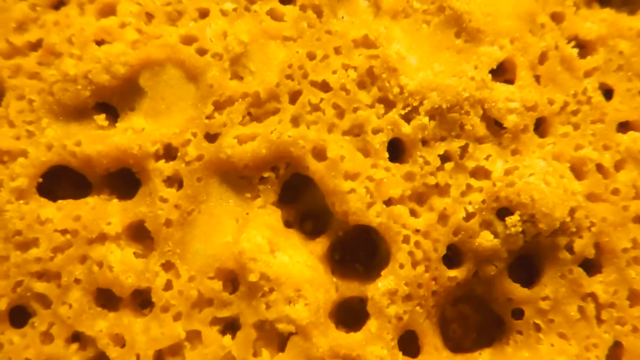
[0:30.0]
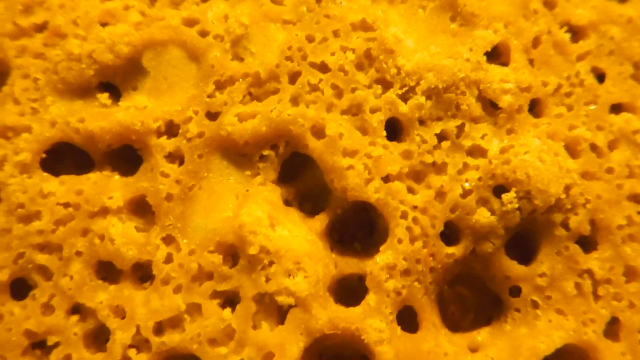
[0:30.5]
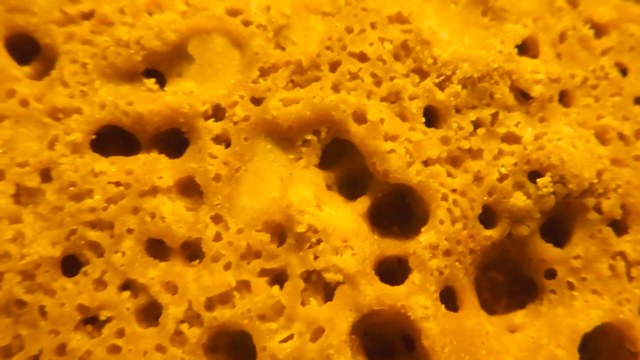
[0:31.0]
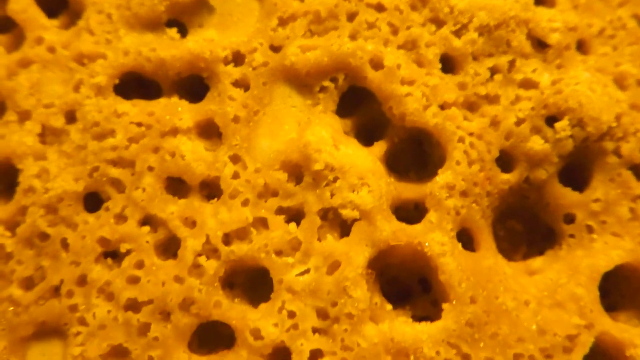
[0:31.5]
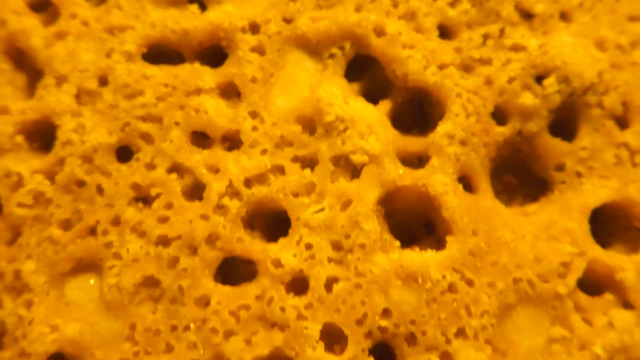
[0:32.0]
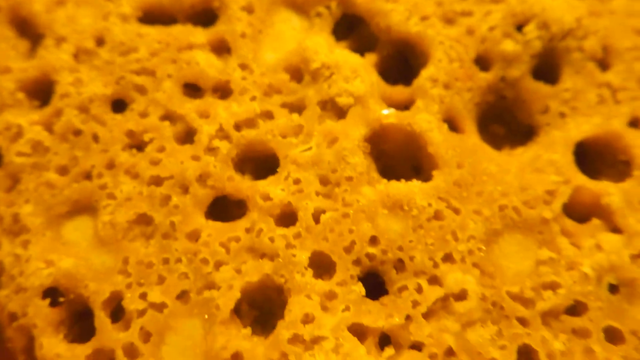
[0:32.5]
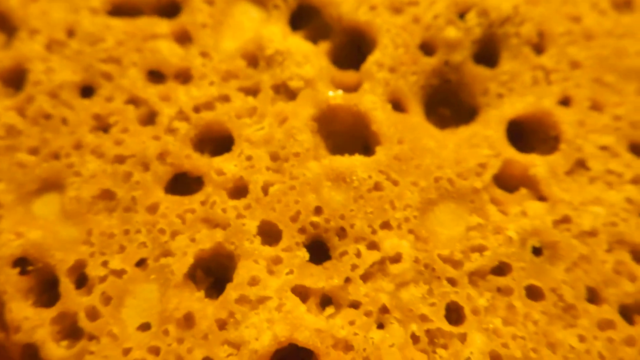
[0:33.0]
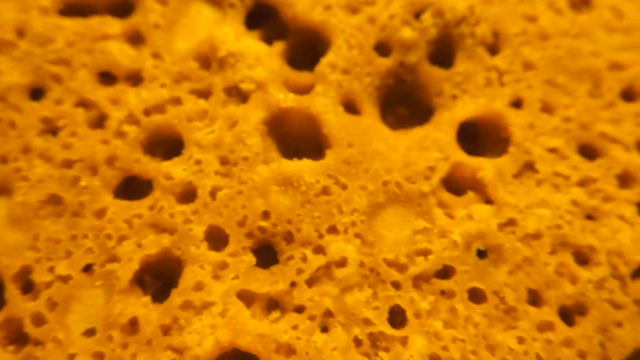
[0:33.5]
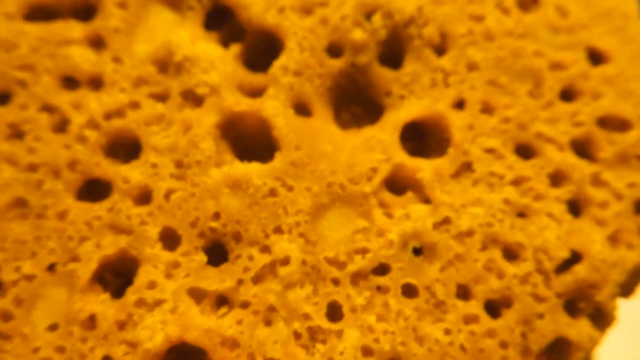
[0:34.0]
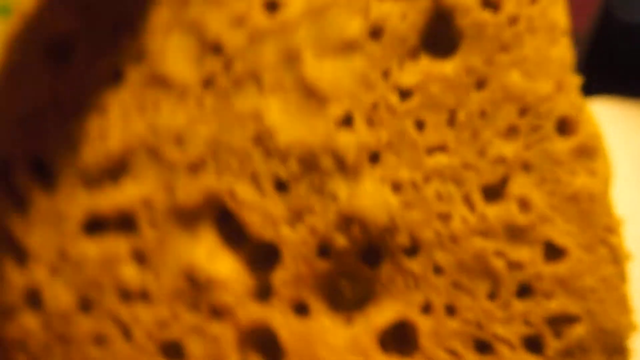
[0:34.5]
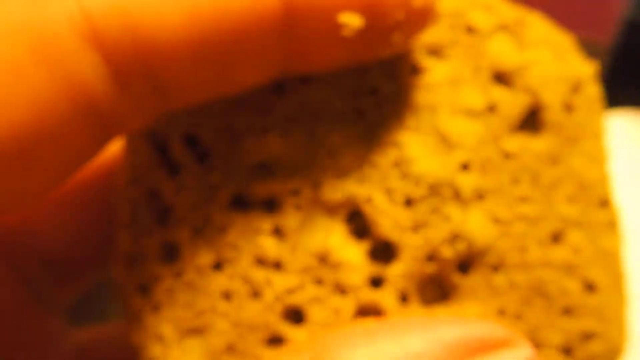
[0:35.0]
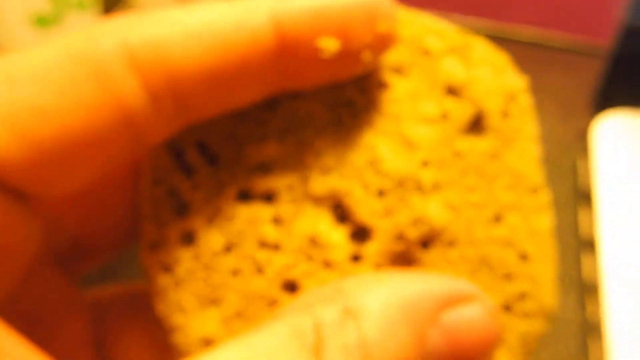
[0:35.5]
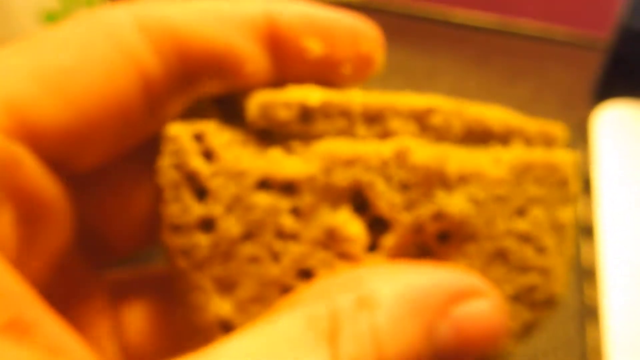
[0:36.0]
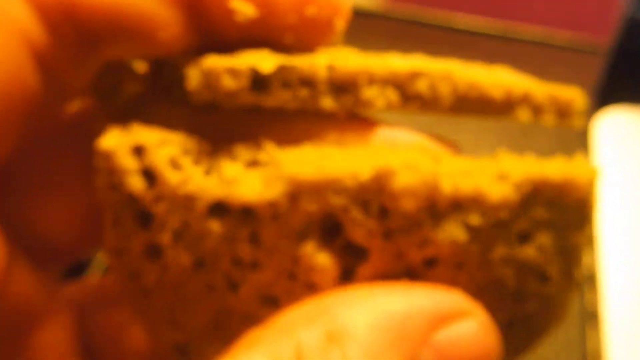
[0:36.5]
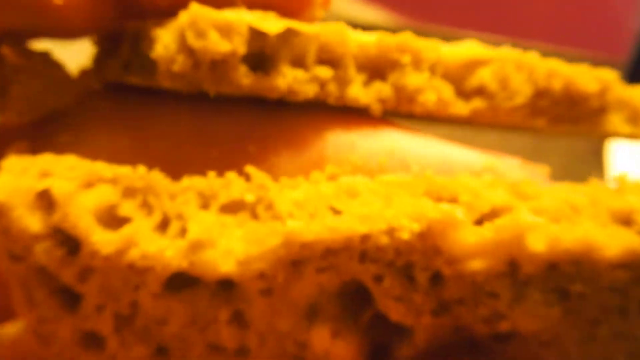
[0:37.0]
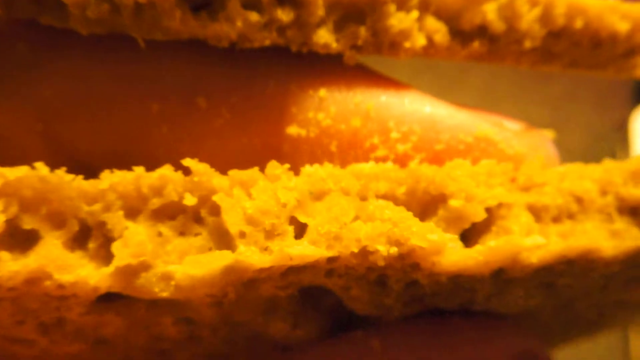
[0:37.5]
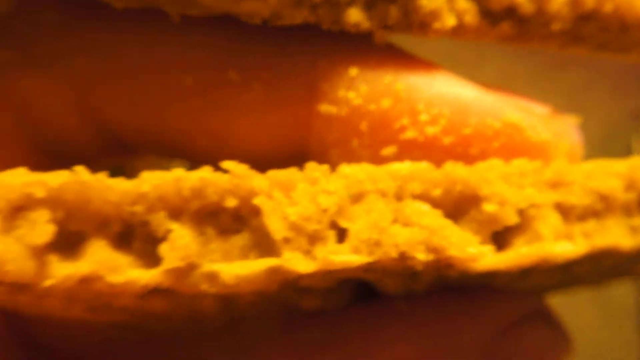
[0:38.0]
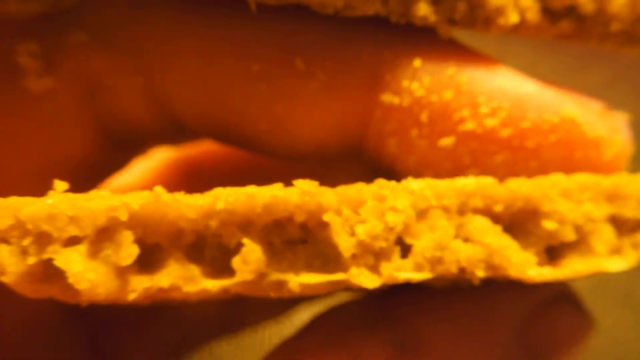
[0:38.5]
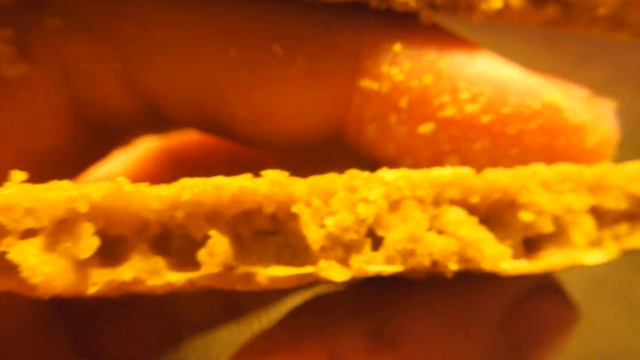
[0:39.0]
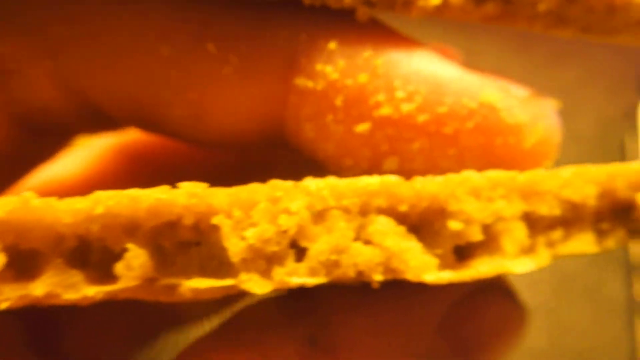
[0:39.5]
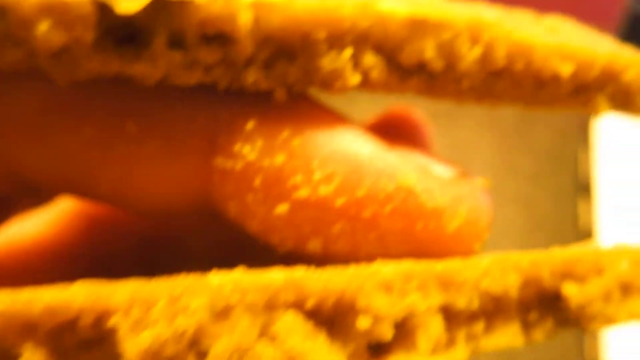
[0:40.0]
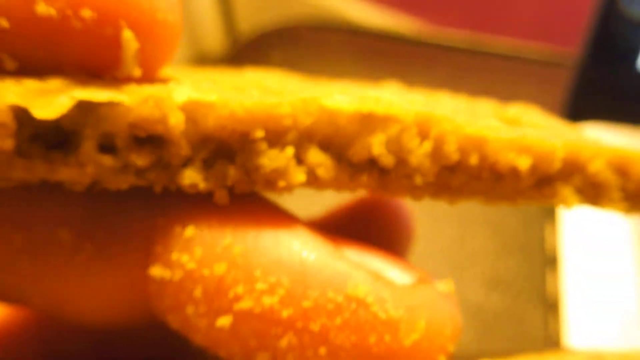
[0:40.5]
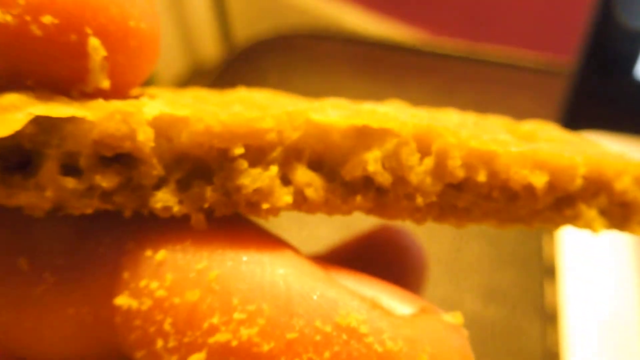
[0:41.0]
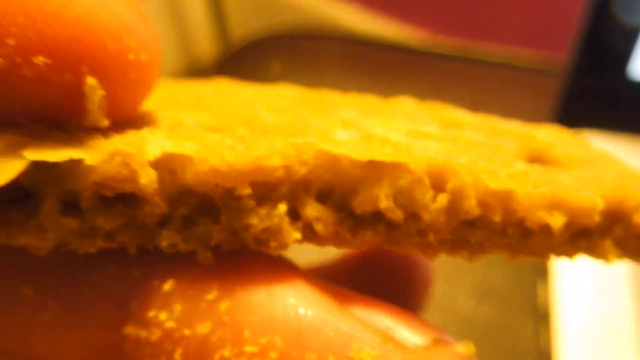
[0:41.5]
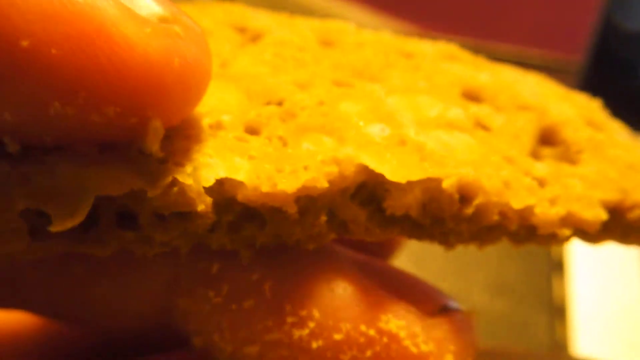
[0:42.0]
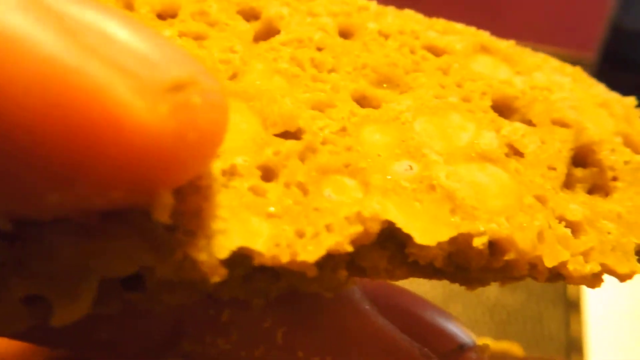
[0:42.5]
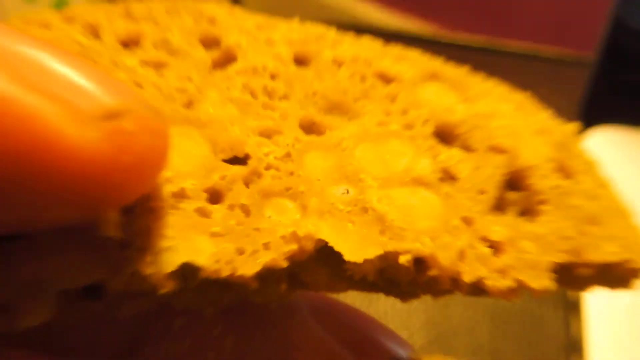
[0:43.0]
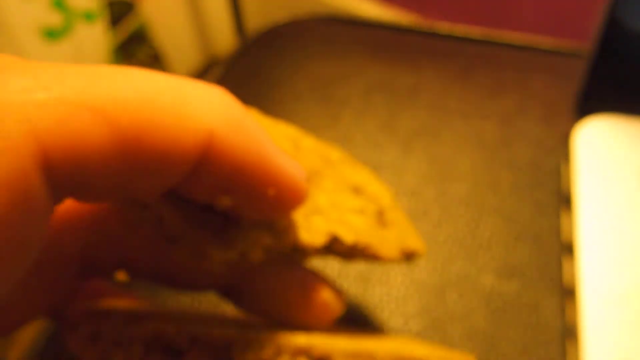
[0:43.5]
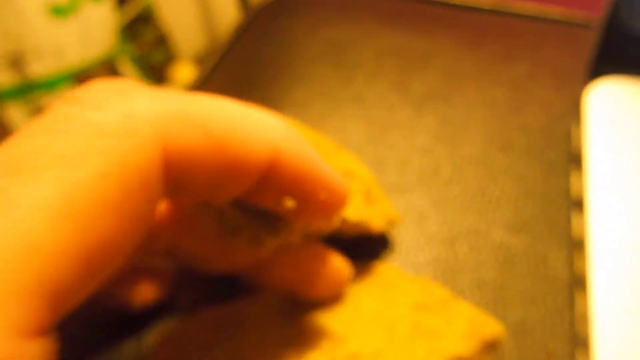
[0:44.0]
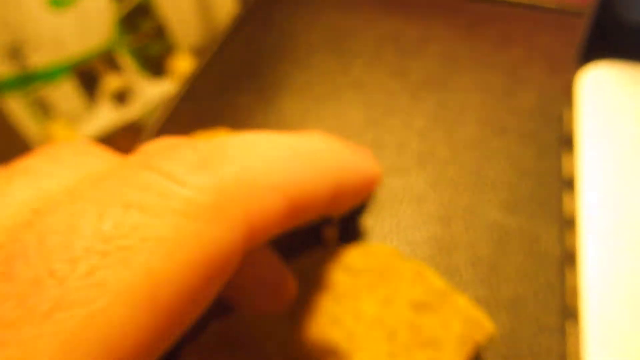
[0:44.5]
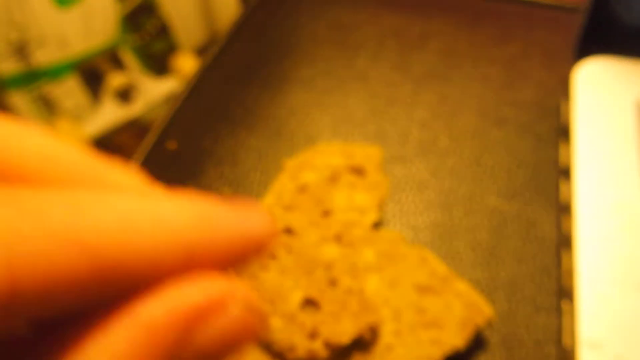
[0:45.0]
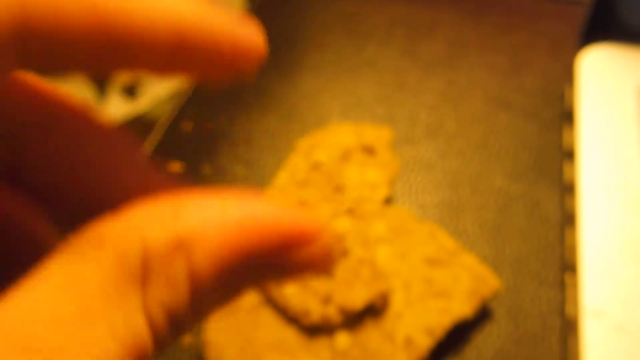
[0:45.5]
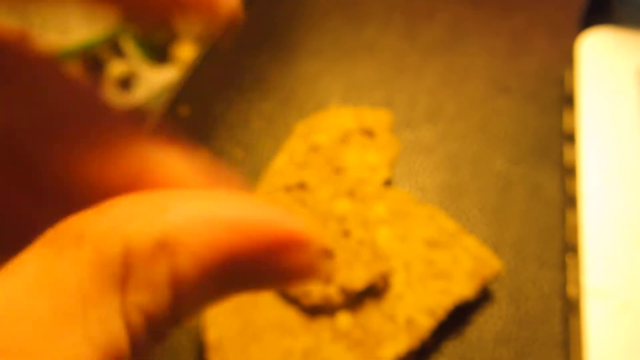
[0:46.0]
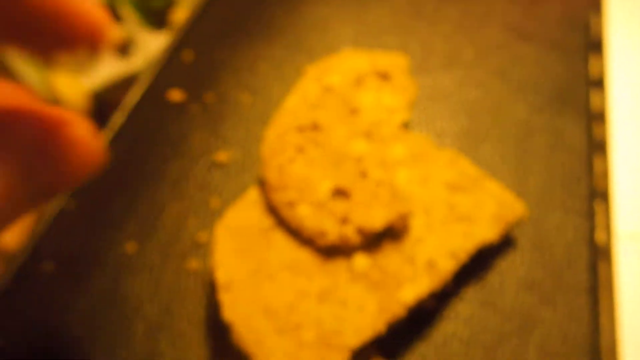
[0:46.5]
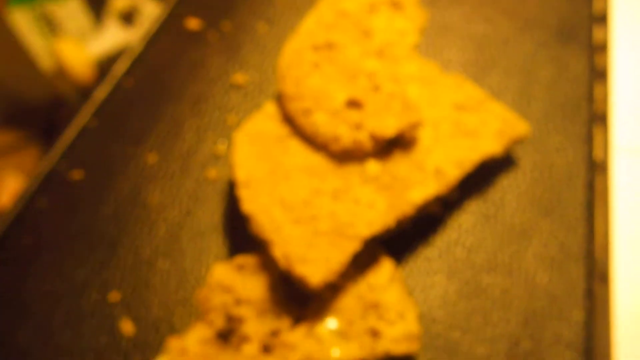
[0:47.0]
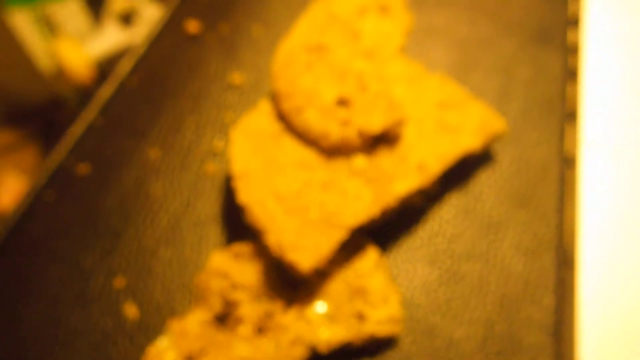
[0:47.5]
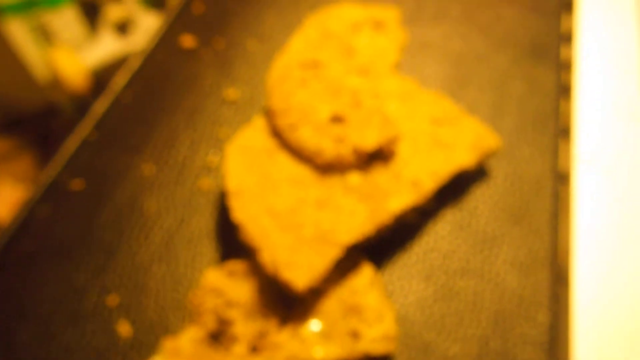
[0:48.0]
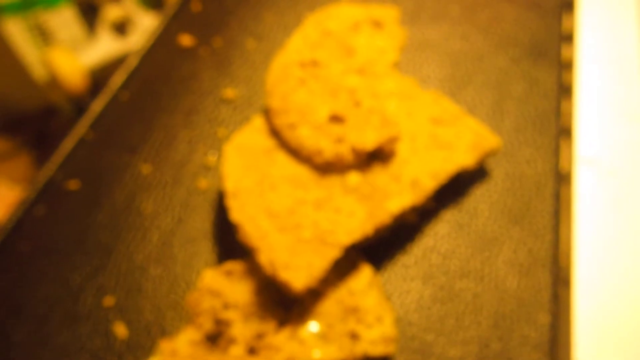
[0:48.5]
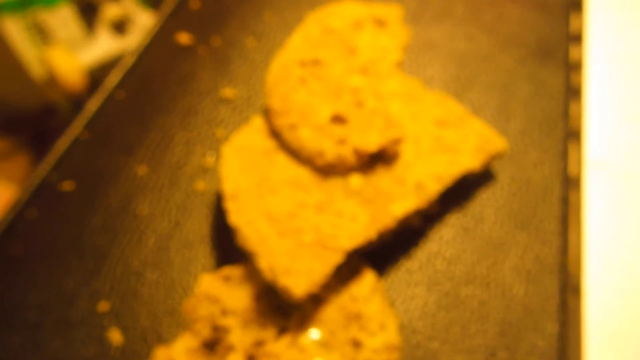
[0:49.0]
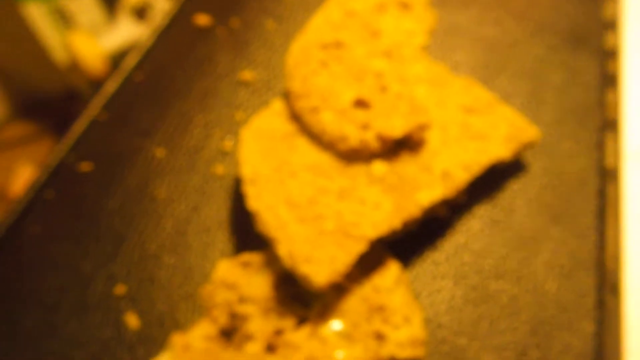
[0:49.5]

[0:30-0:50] A very close-up view shows some of the bigger holes and nooks and crannies. Only the person's left hand is visible, and they use a finger to break the food in half. Broken in half, it looks like some type of cookie, and some of the nooks and crannies inside are visible. The hand sets the pieces down and kind of shakes the crumbs off onto a plate sitting there. The plate is oblong, like a rectangle, and very dark brown, almost looking like wood.